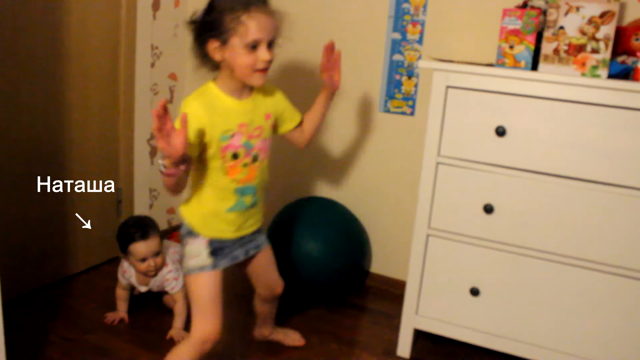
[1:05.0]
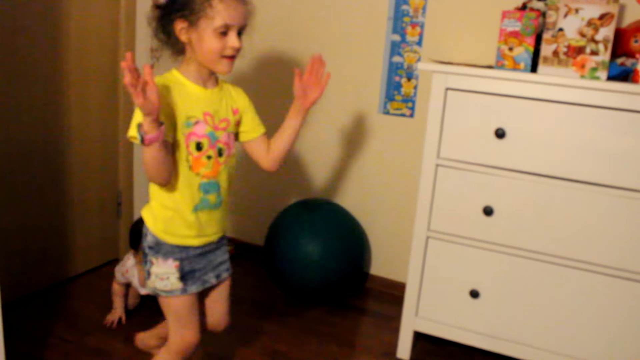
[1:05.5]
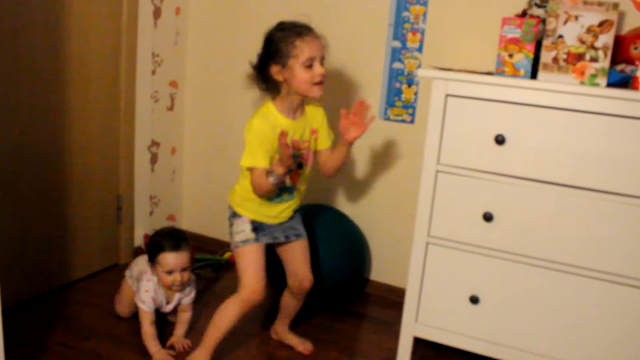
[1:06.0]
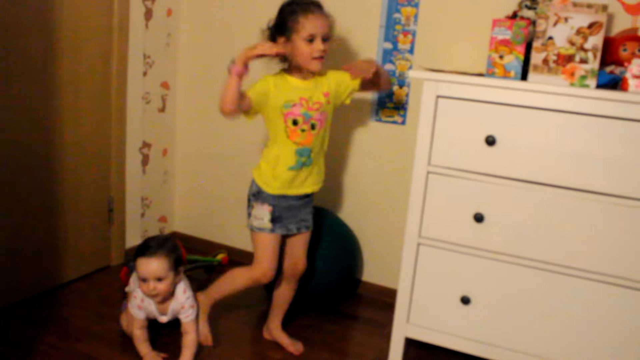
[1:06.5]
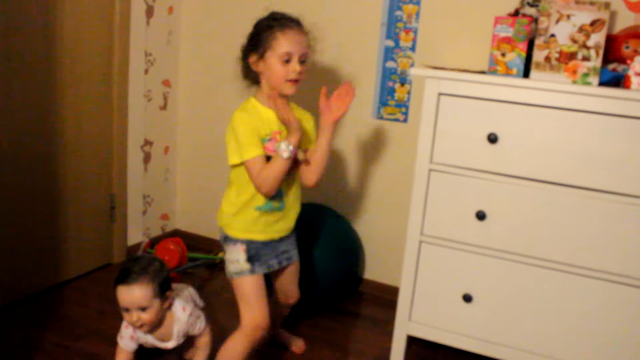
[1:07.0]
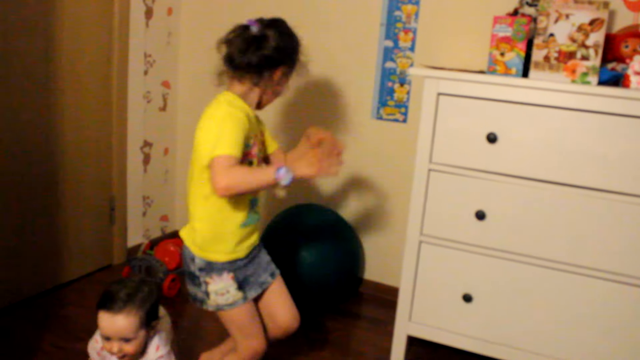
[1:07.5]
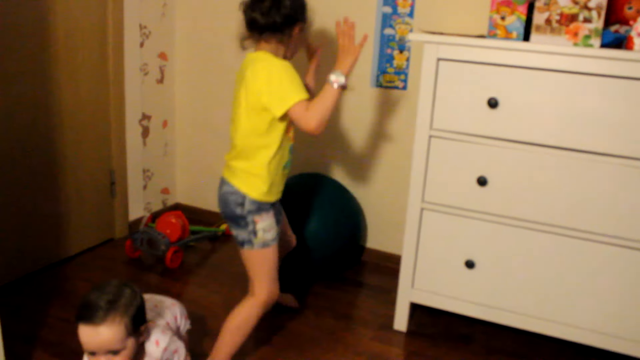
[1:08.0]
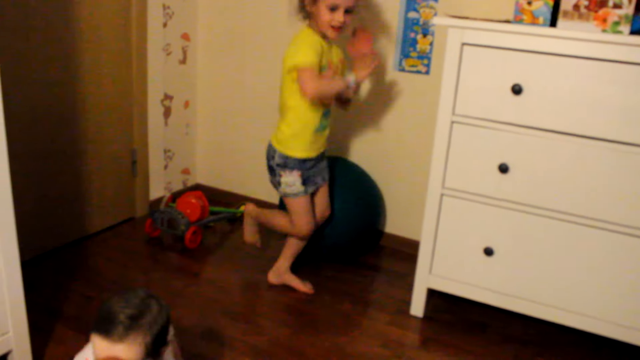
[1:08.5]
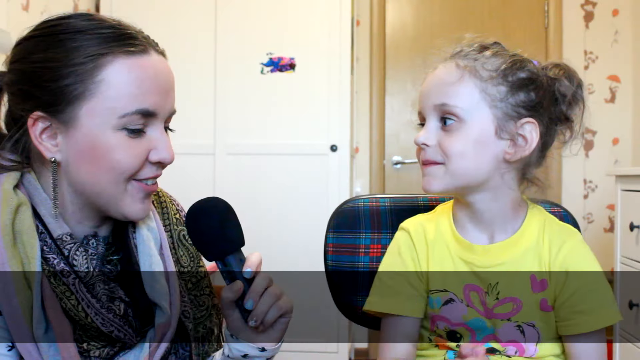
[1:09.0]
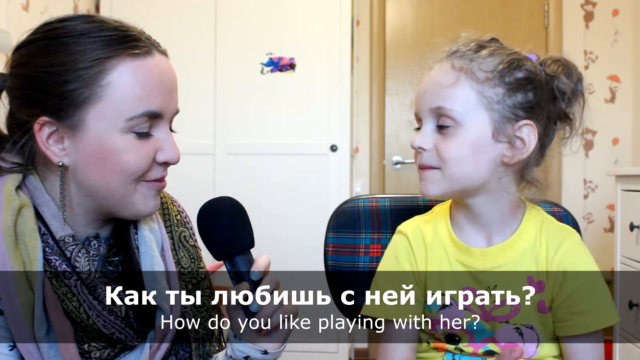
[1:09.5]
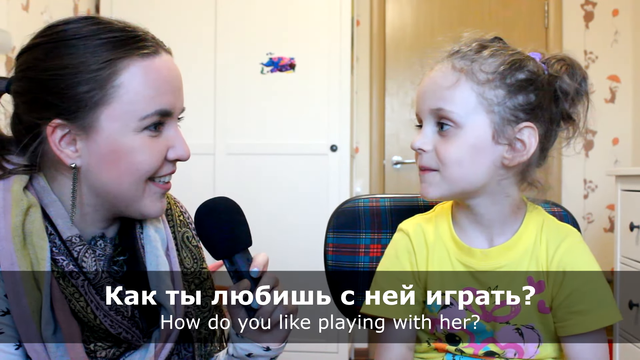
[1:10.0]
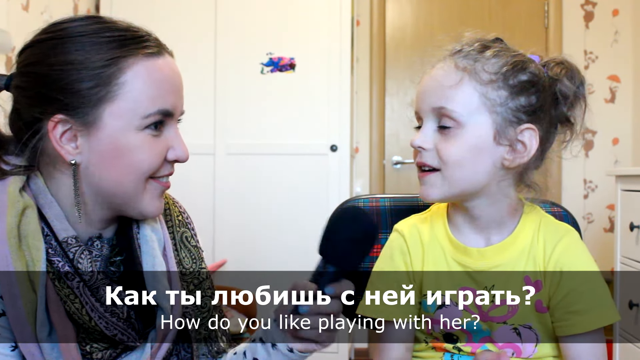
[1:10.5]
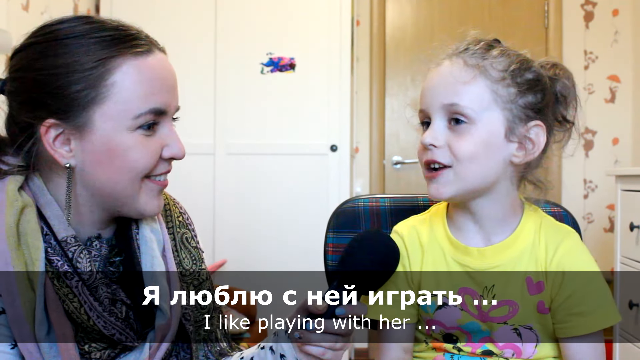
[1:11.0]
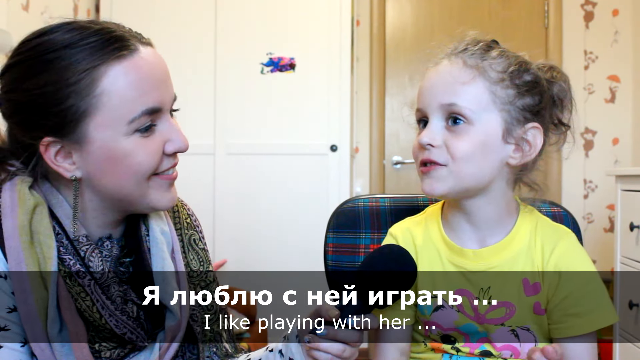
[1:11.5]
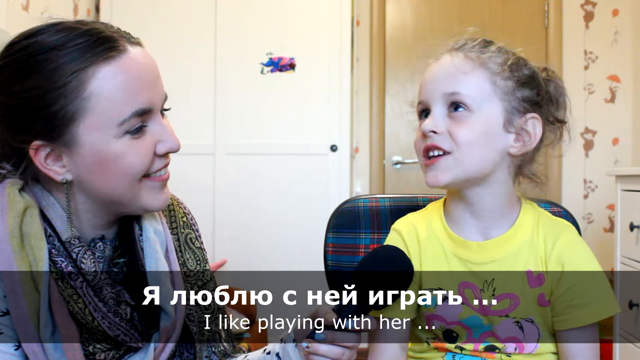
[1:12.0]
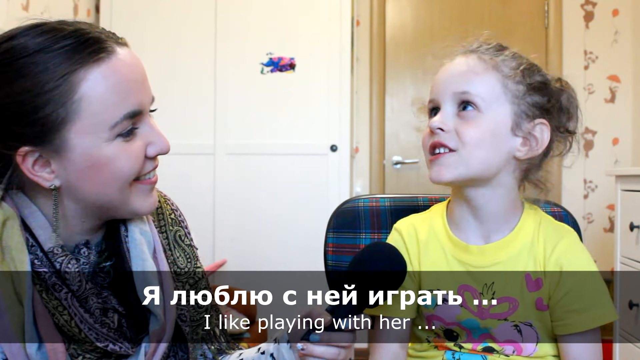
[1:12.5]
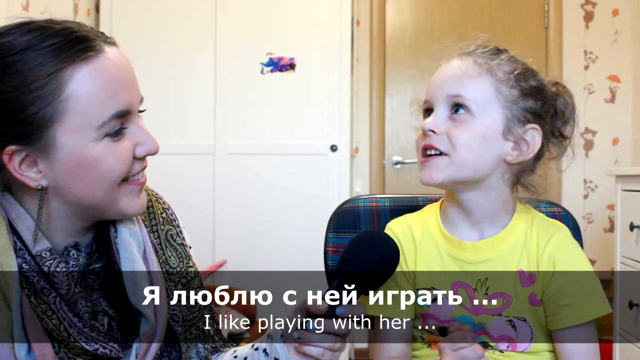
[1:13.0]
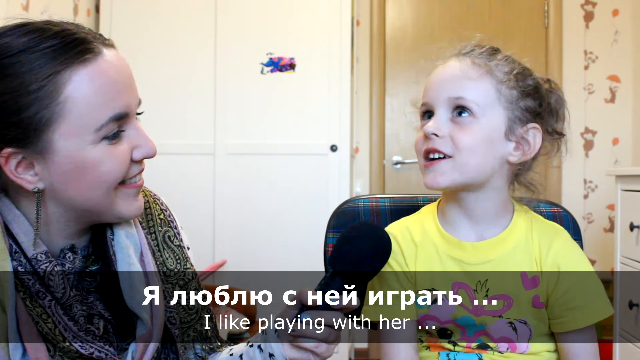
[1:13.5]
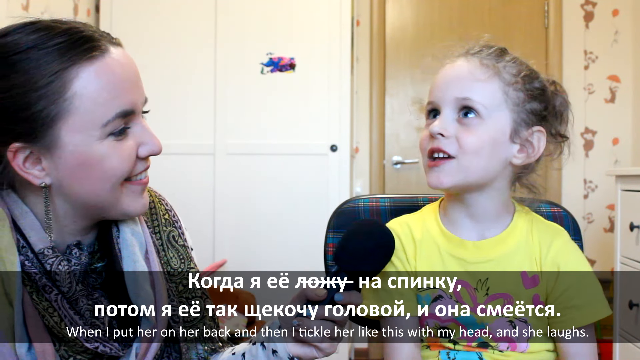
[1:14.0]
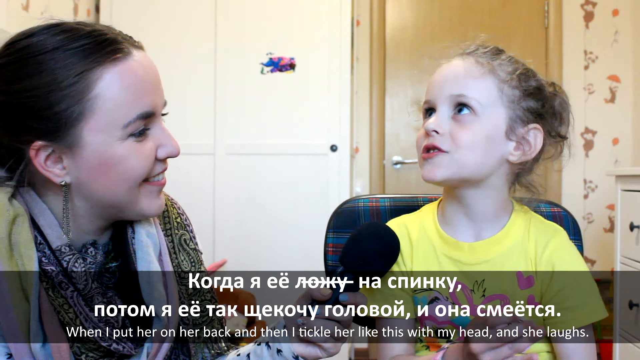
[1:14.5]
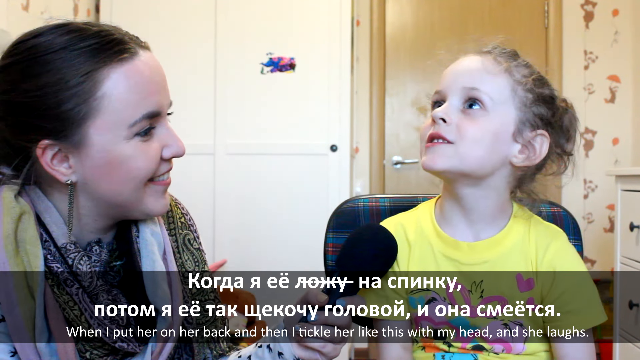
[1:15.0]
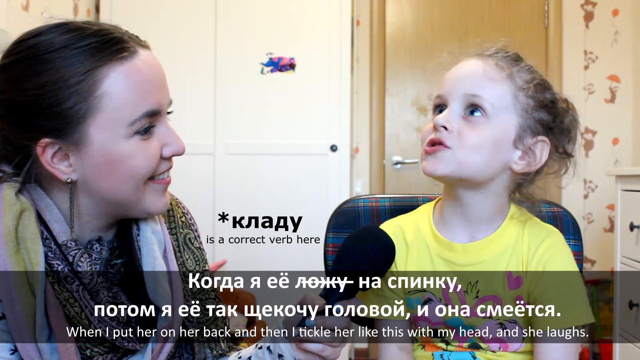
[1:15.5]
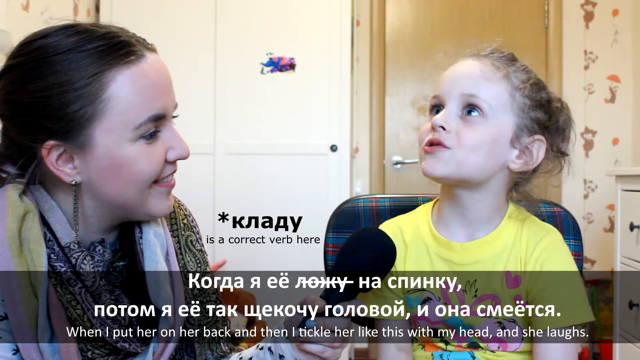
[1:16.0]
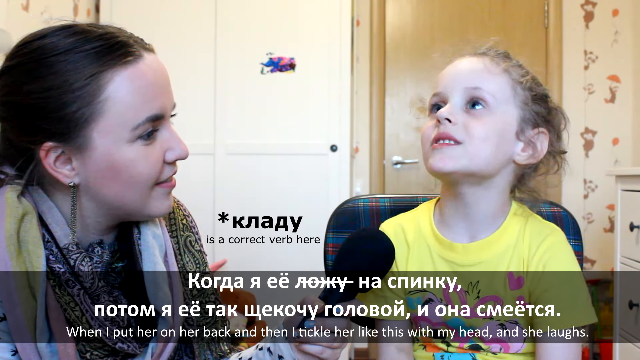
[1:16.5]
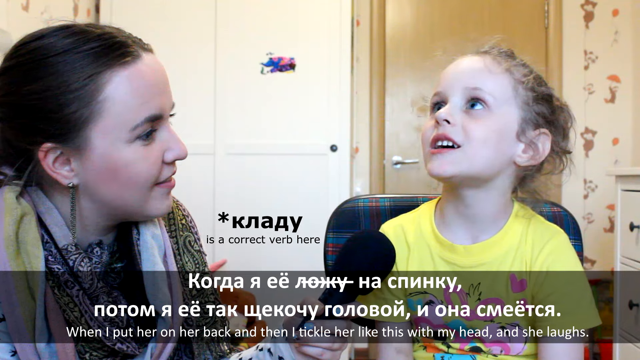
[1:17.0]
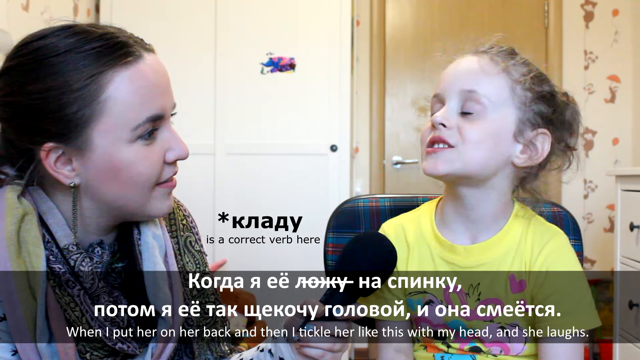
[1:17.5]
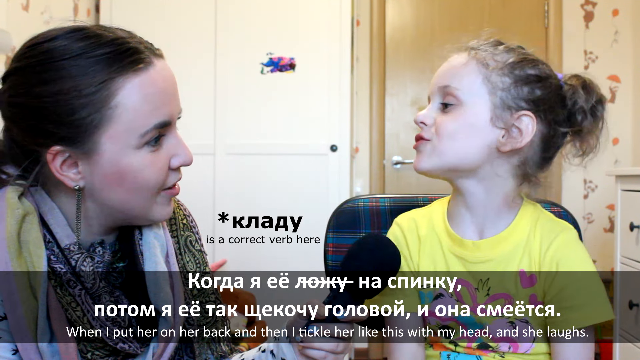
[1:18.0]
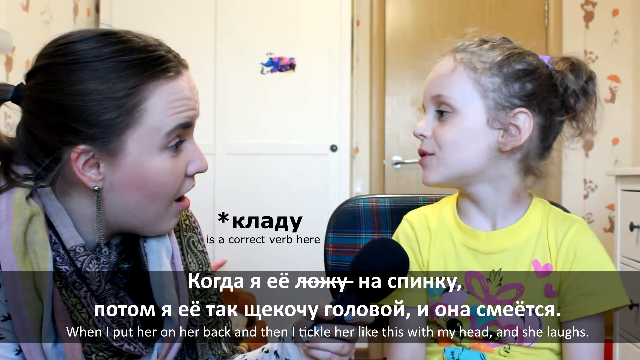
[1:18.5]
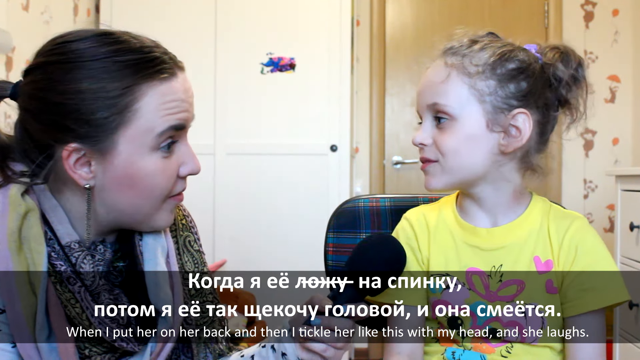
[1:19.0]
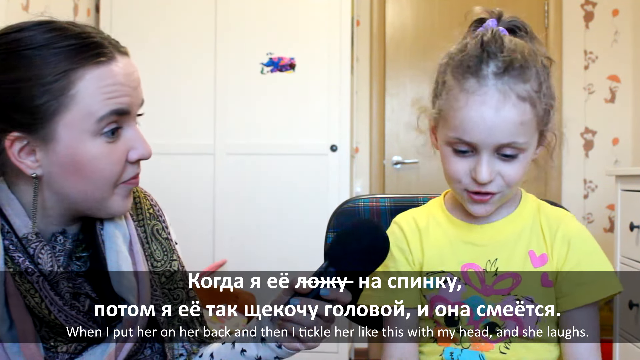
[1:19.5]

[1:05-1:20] The home footage continues, with Ksyusha dancing while her baby sister crawls around on the floor. After a second the arrow disappears, and the girl makes a wave motion. The woman asks how she likes playing with her, and Ksyusha answers, "I like playing with her when I put her on her back and then I tickle her like this with my head and she laughs." A few seconds into the answer, a small black asterisk with text pops up in the space between the woman and the girl, indicating that a specific word is the correct verb, apparently correcting a grammatical error the girl made. The girl rocks back and forth on her two feet and makes a wave motion with her arms while the baby crawls around in the background; at one point it looks like she almost trips her.